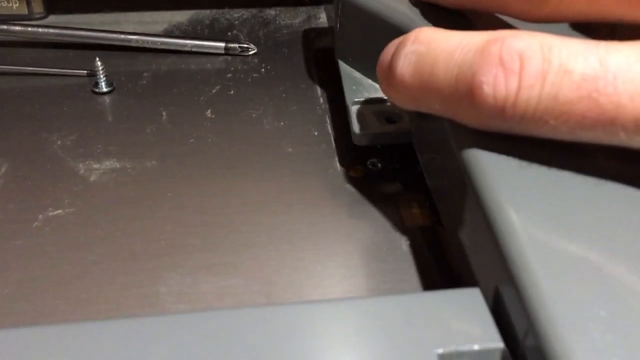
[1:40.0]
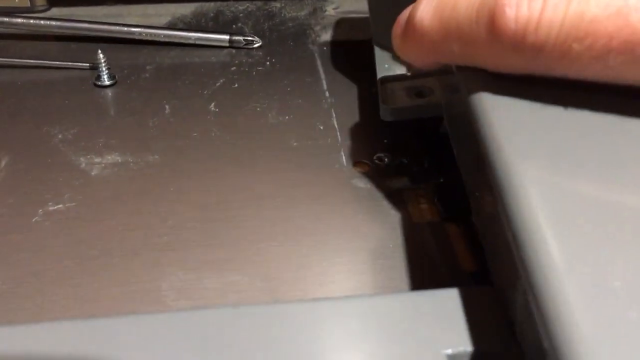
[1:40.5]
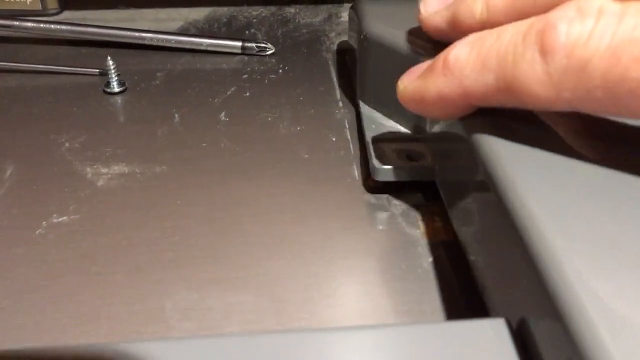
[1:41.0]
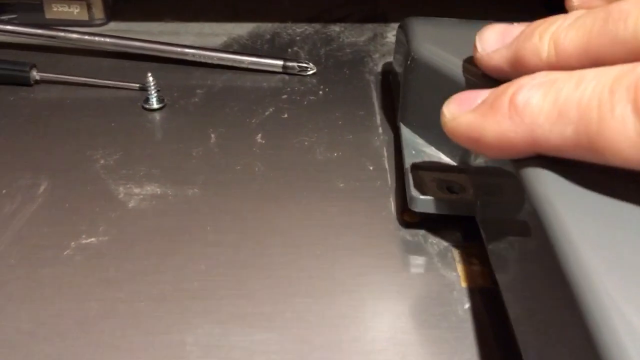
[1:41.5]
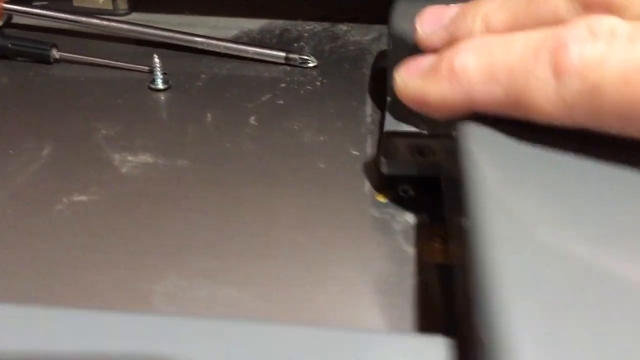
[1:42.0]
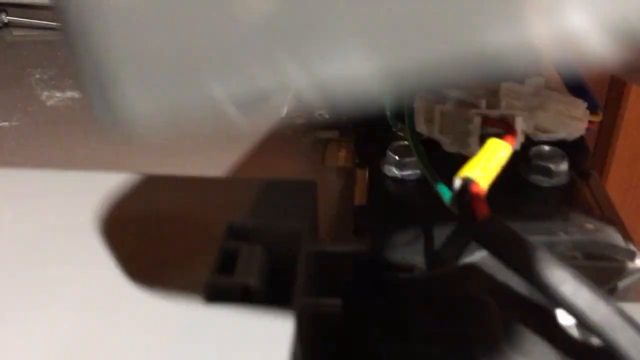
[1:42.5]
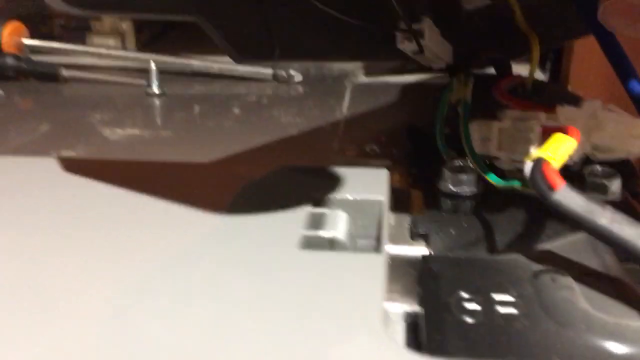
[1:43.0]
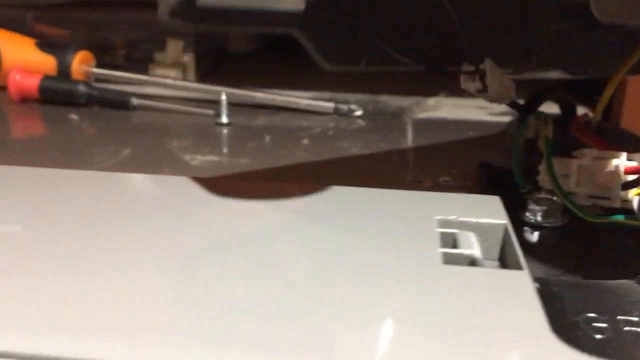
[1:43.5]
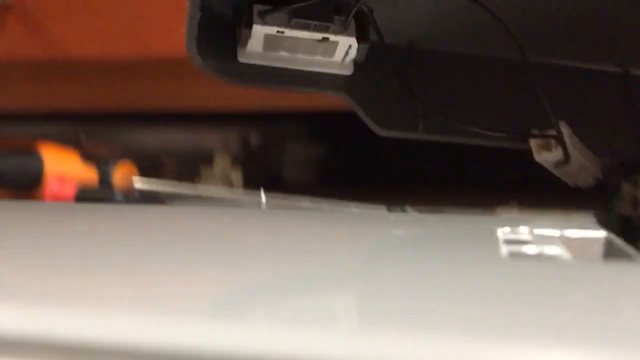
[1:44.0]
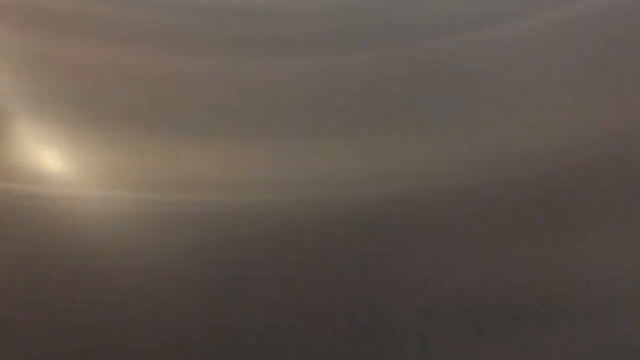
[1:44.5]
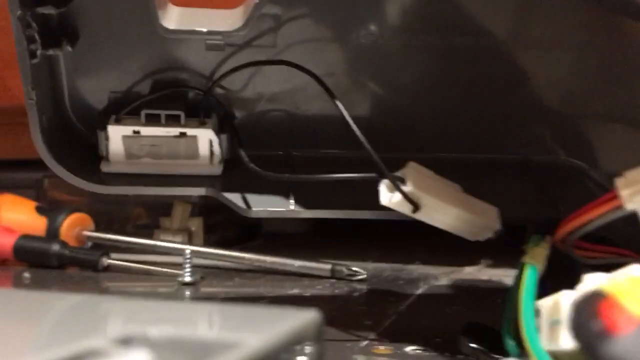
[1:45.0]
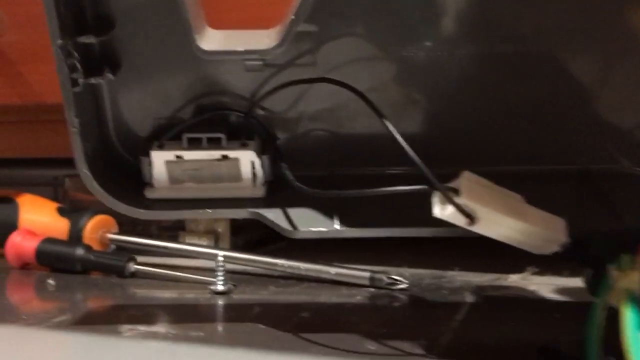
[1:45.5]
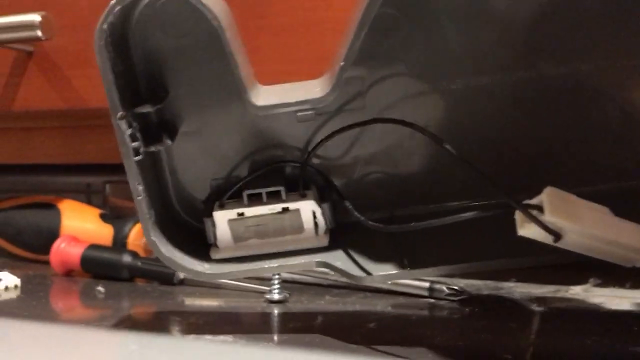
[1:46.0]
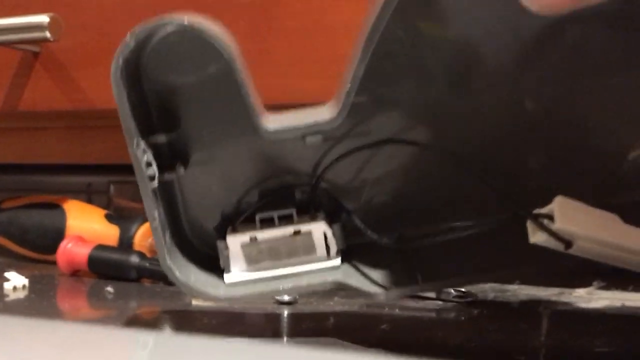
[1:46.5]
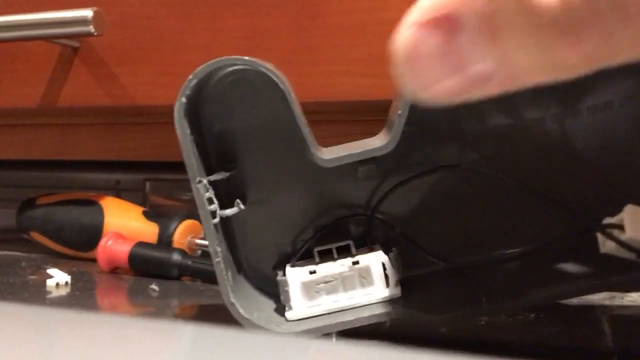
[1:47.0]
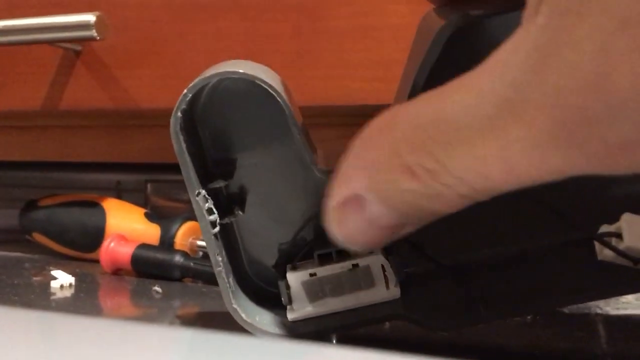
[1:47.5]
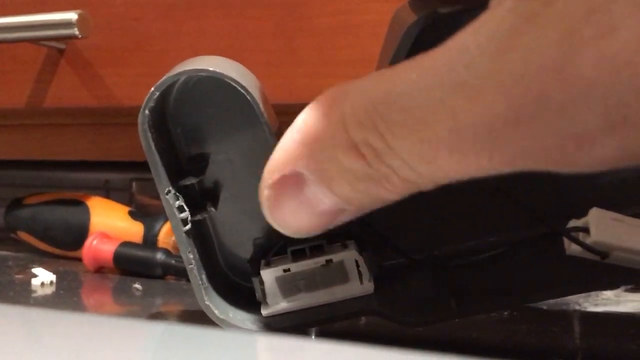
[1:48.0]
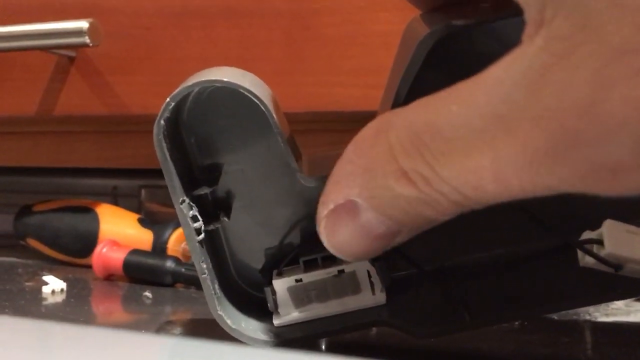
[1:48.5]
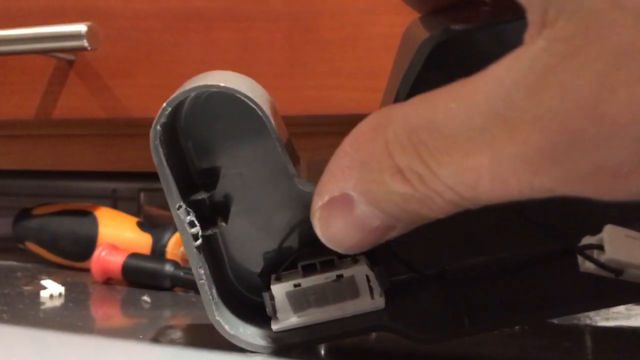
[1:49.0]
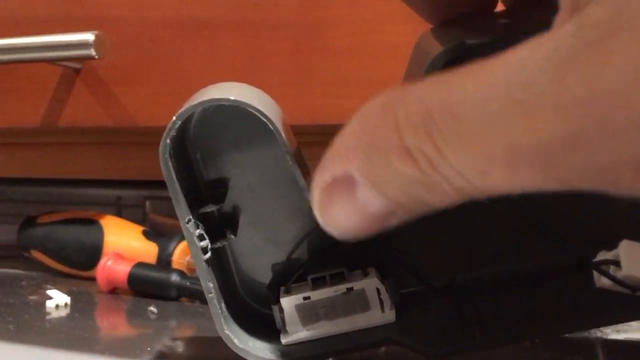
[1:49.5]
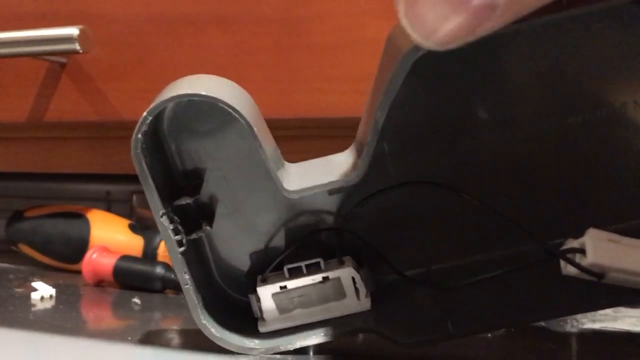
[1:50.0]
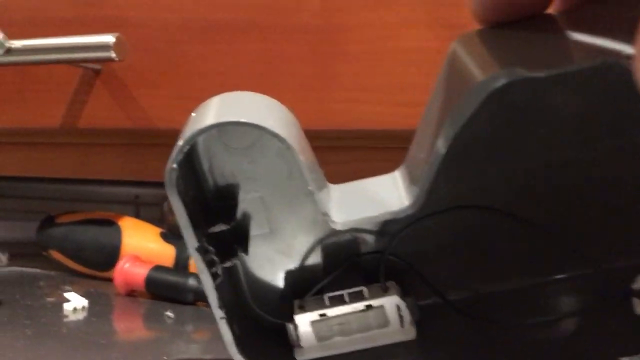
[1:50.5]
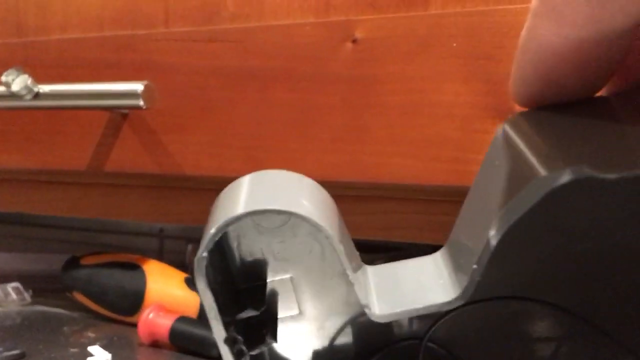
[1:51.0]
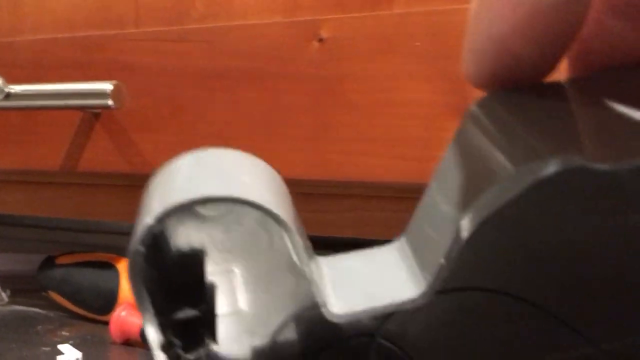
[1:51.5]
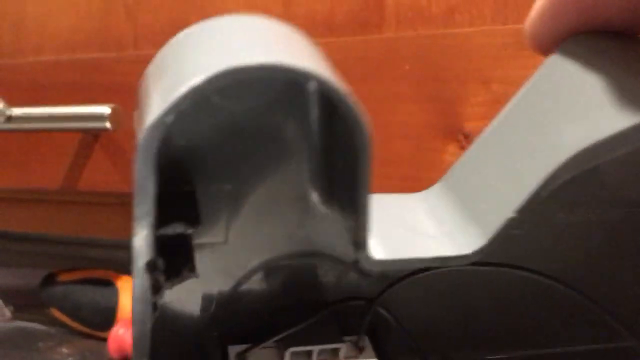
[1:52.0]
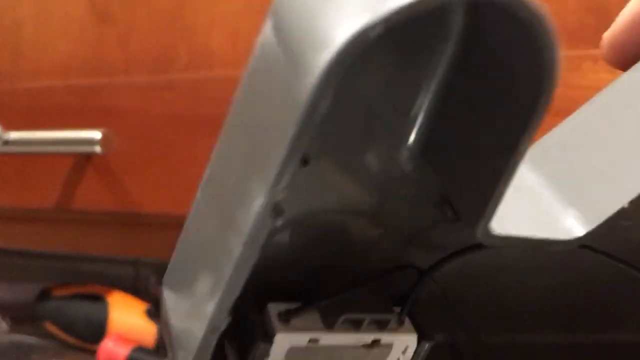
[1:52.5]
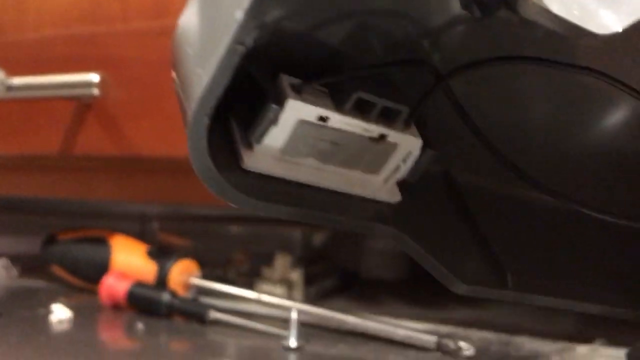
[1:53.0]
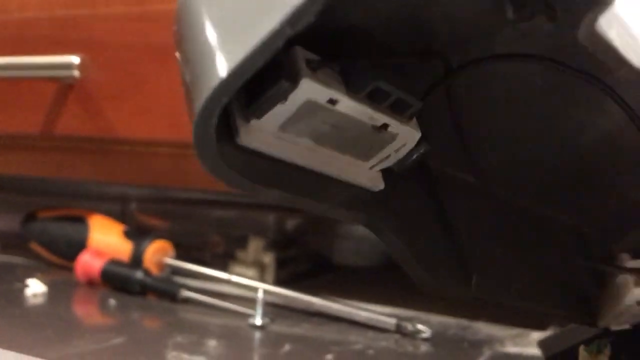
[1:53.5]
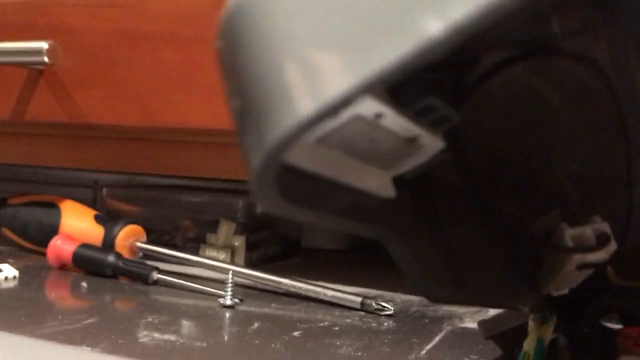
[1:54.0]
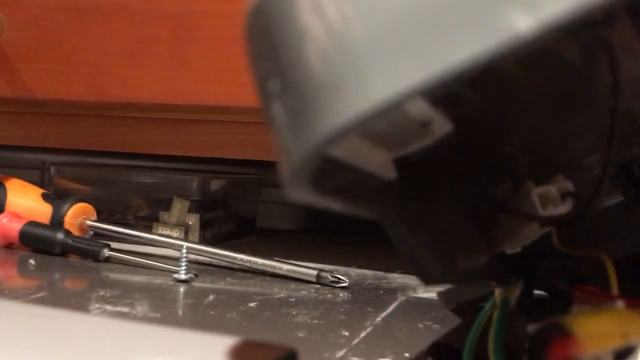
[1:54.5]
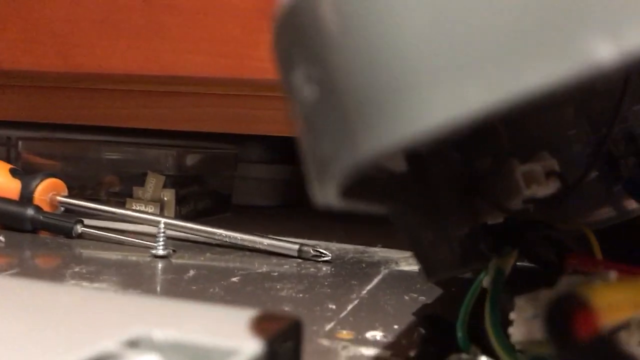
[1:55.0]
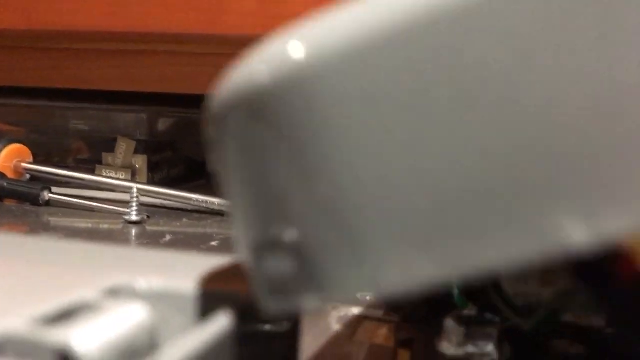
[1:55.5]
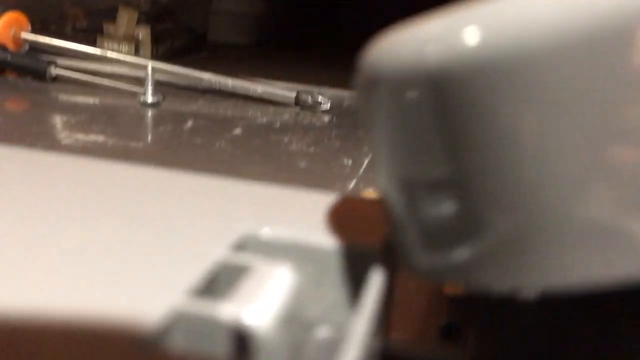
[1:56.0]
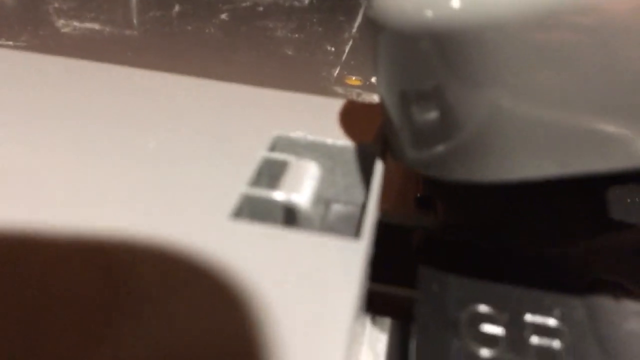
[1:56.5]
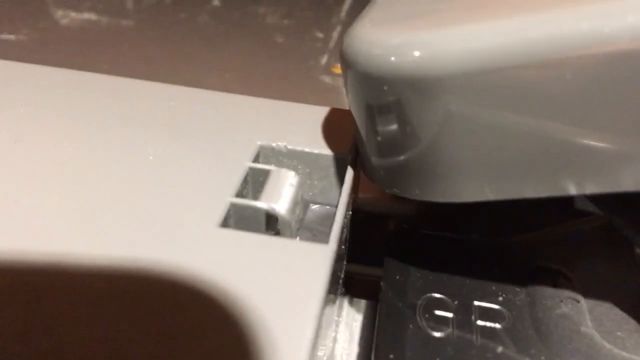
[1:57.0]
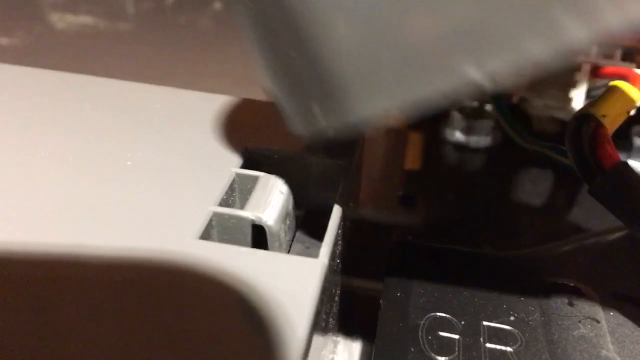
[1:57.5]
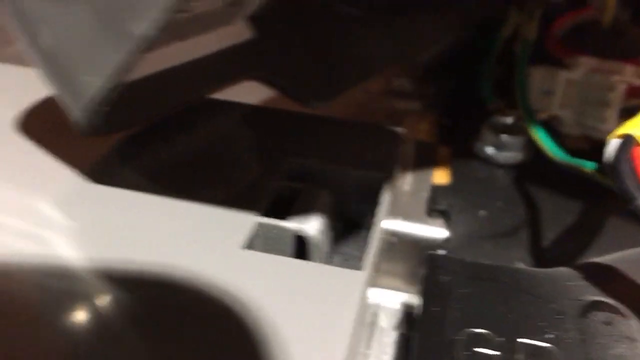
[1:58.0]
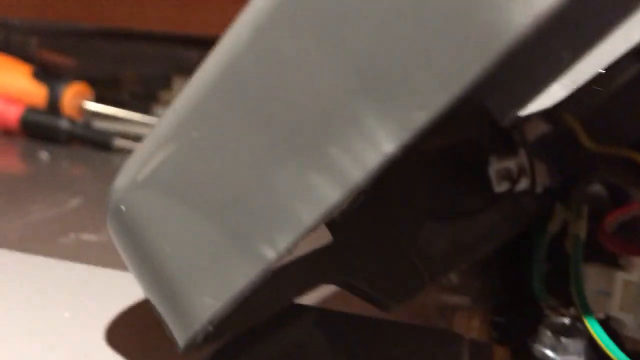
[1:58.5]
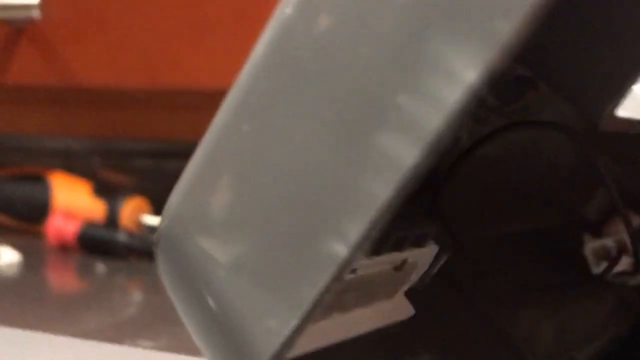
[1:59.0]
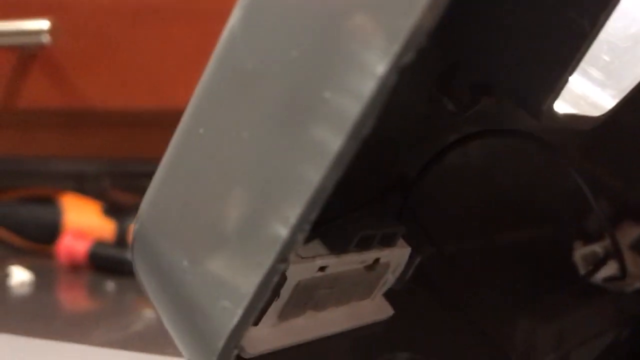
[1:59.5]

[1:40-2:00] In a slightly wide frame, the view looks down on the top of a fridge at the top end of the right-hand door. On the right is a loose piece of gray plastic, and a hand coming in from the right jiggles it up and down. On the left are the end of a Phillips head screwdriver and an upside-down screw, likely meant for the screw hole on the left side of the plastic. The fridge appears to be stainless steel. The person removes the plastic cover, revealing a bunch of wires underneath, and points with their thumb at a Molex connector under the removed cap, attached by two black wires, as if talking about it. They take the cover and go to put it back on, but instead take it off again. Underneath are various wires and an electronic board. The hand is a white person's. On top of the fridge there is a lot of dust and debris, which may or may not be from detaching the plastic piece.